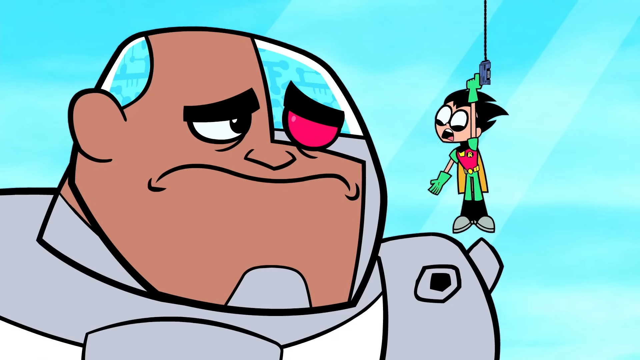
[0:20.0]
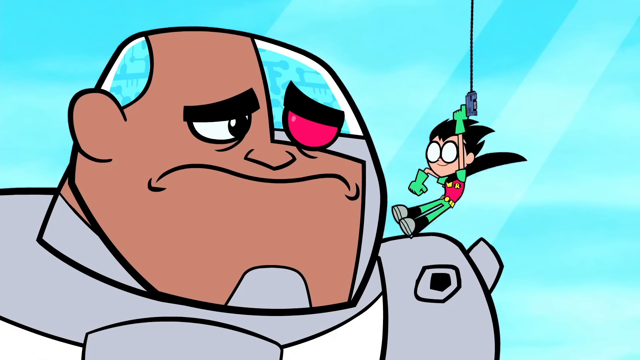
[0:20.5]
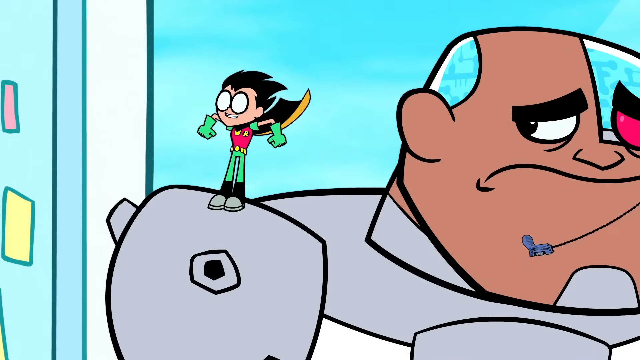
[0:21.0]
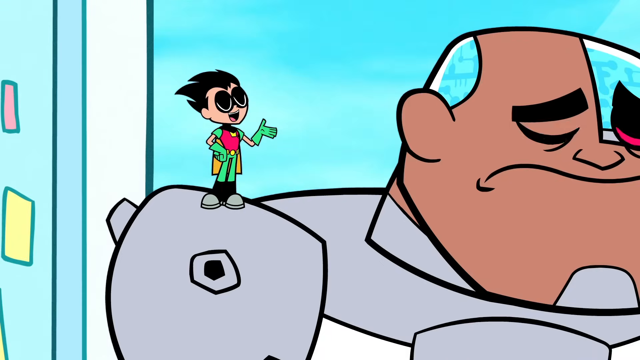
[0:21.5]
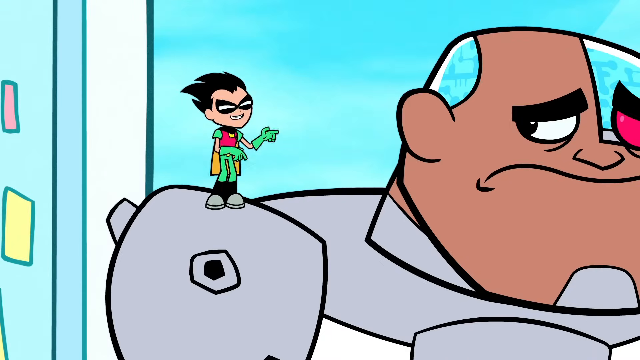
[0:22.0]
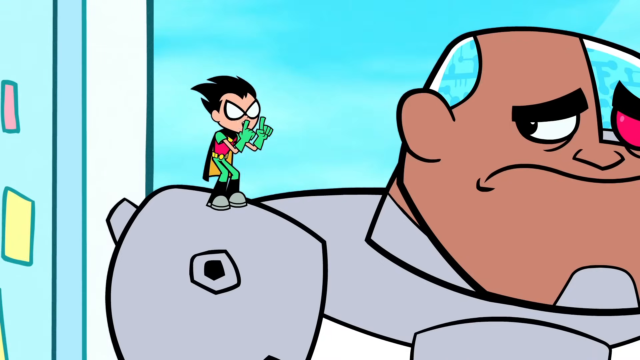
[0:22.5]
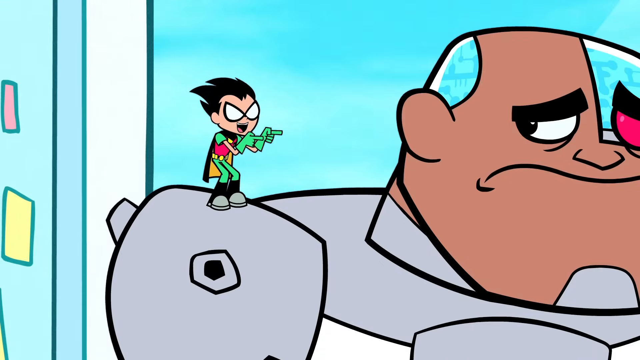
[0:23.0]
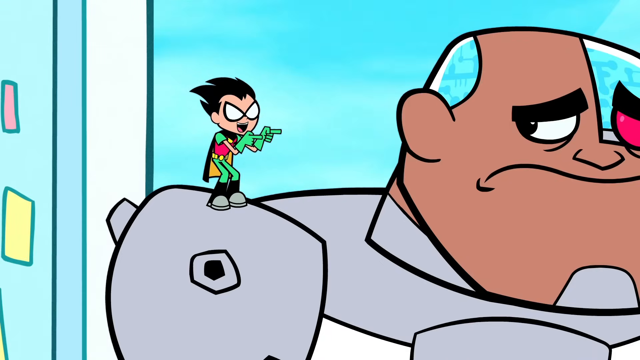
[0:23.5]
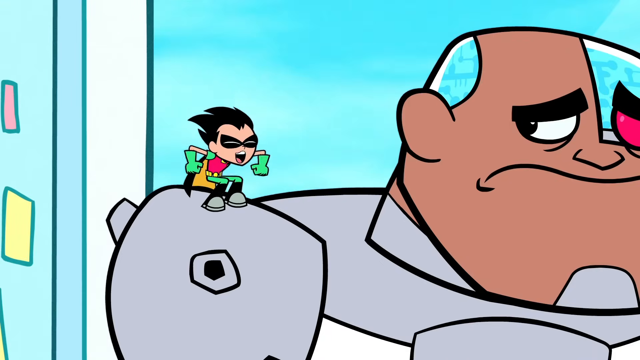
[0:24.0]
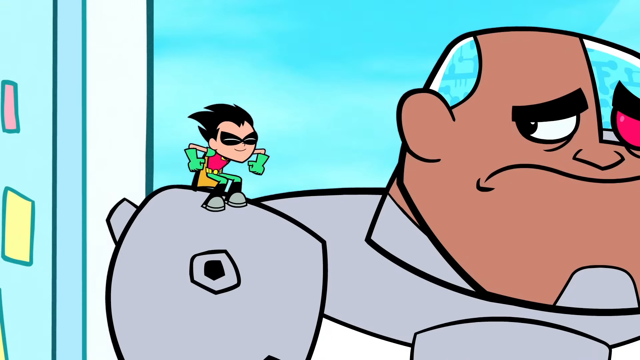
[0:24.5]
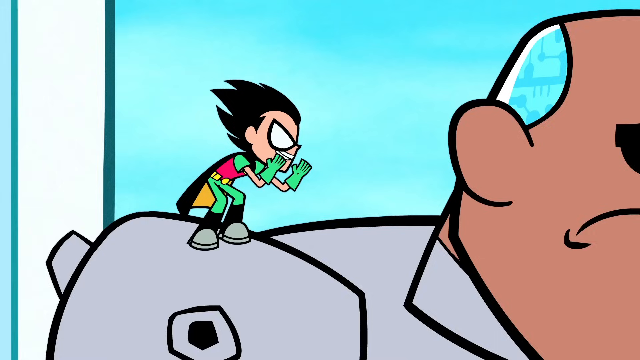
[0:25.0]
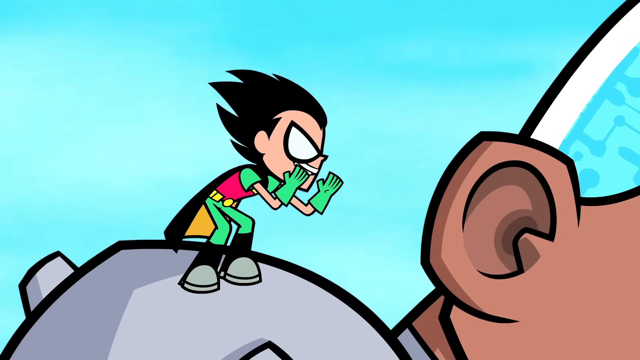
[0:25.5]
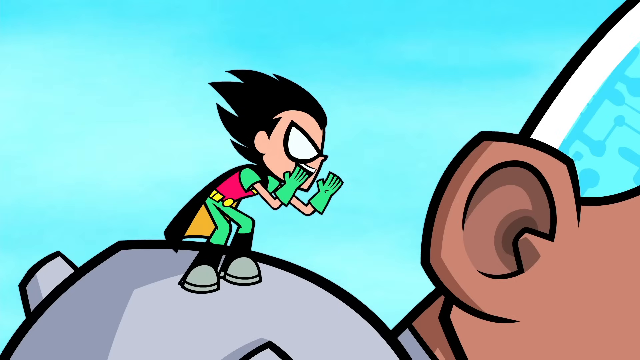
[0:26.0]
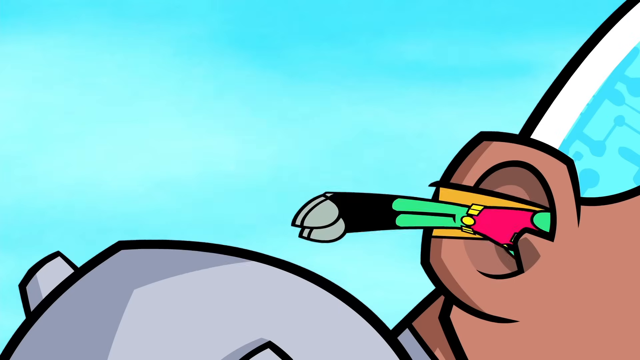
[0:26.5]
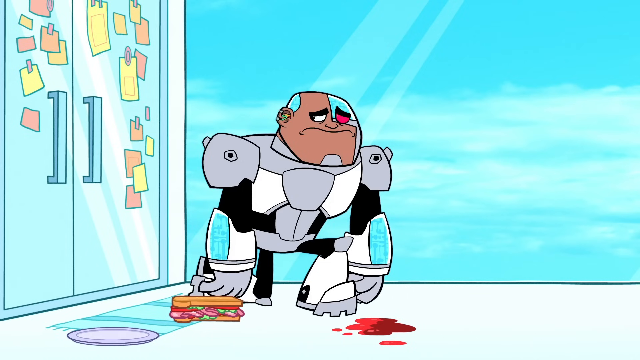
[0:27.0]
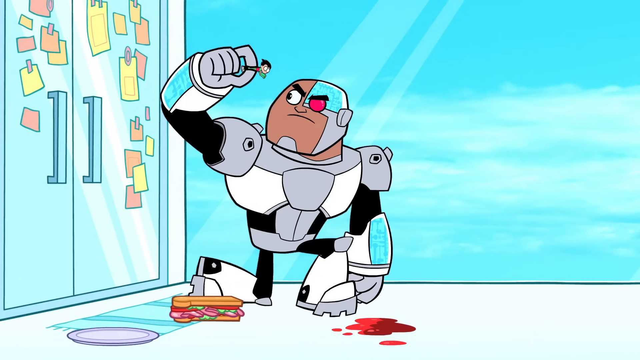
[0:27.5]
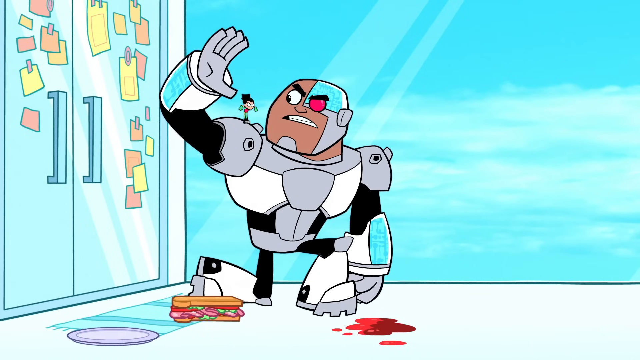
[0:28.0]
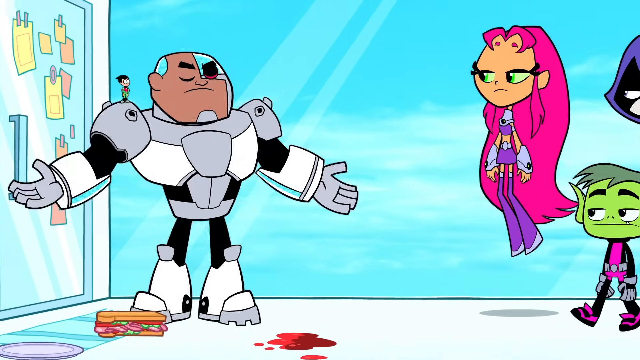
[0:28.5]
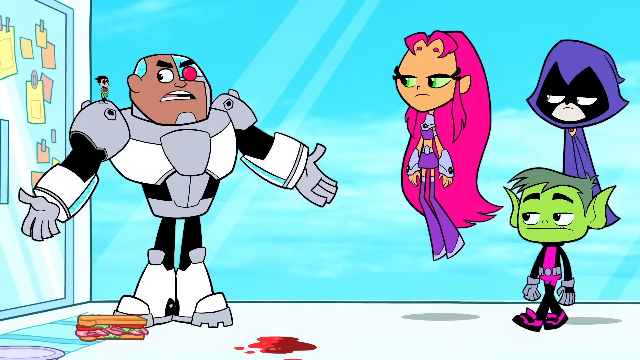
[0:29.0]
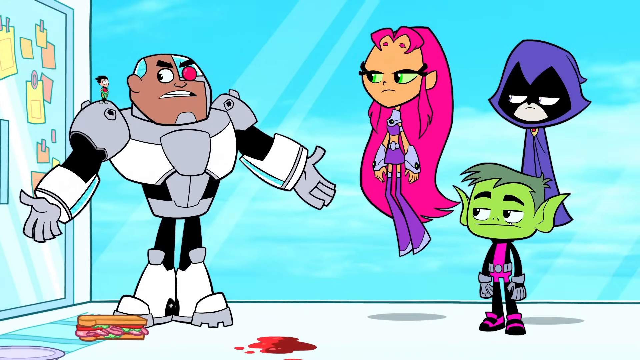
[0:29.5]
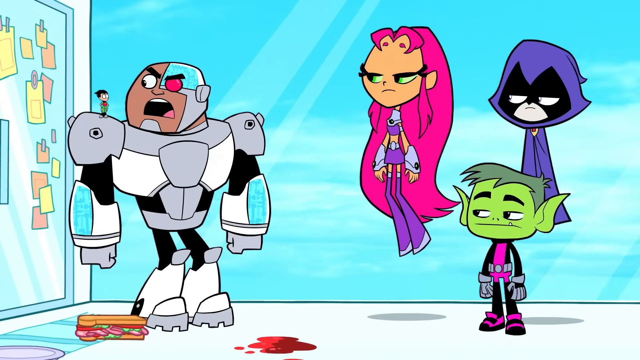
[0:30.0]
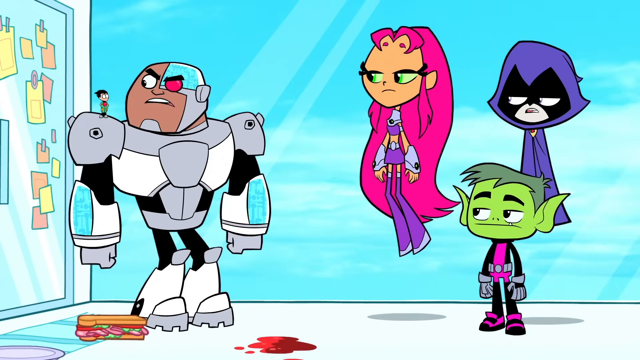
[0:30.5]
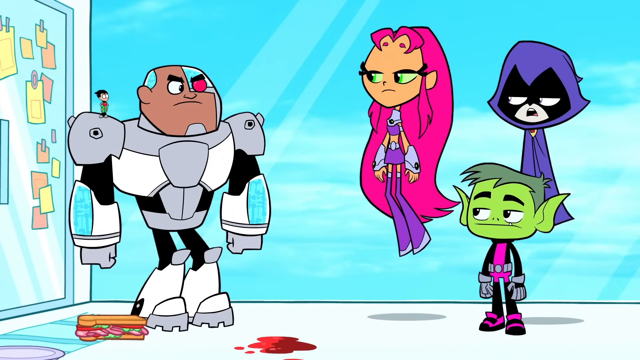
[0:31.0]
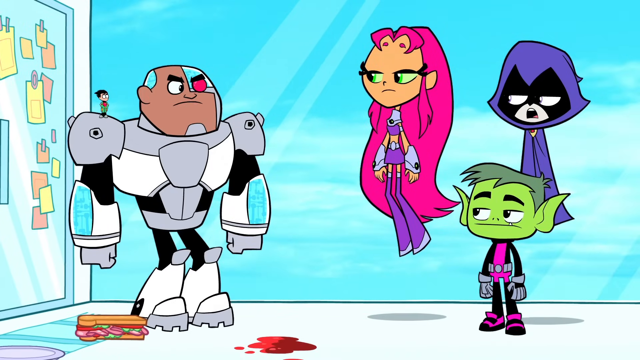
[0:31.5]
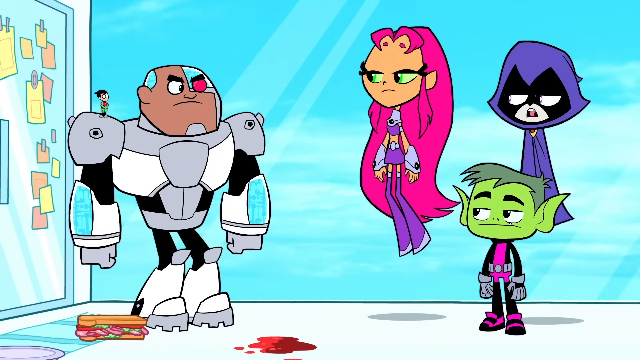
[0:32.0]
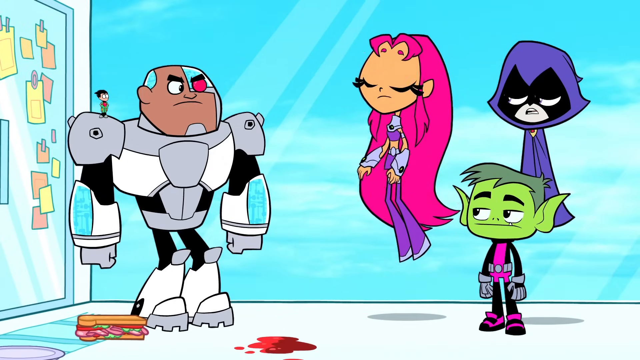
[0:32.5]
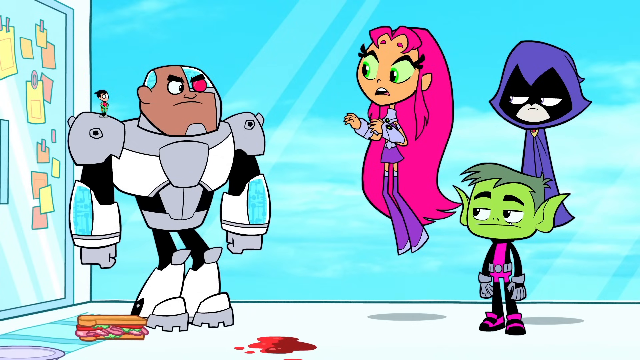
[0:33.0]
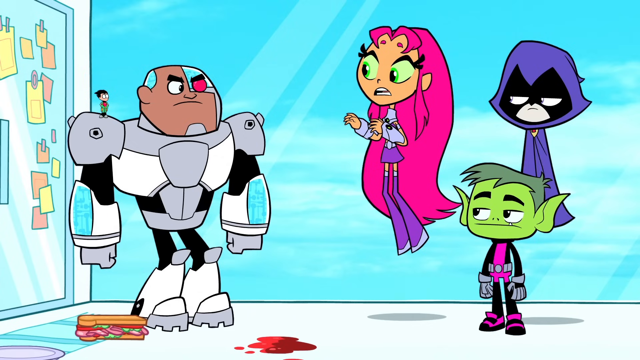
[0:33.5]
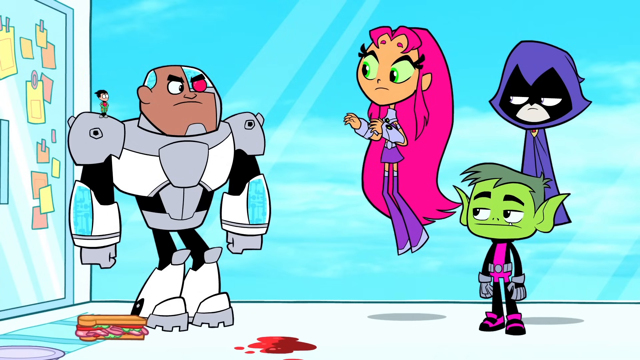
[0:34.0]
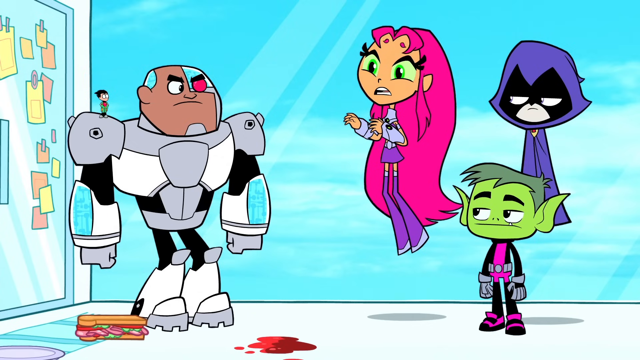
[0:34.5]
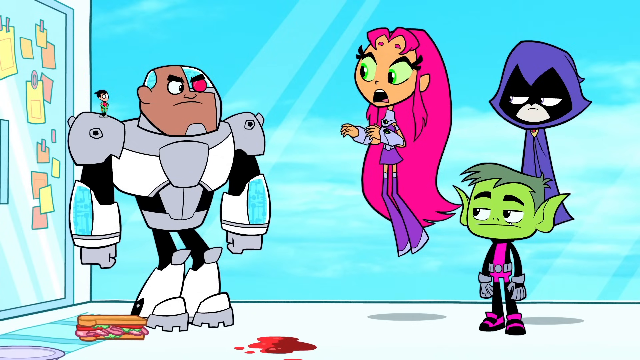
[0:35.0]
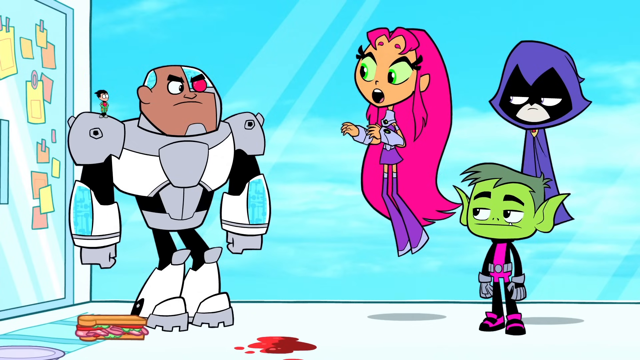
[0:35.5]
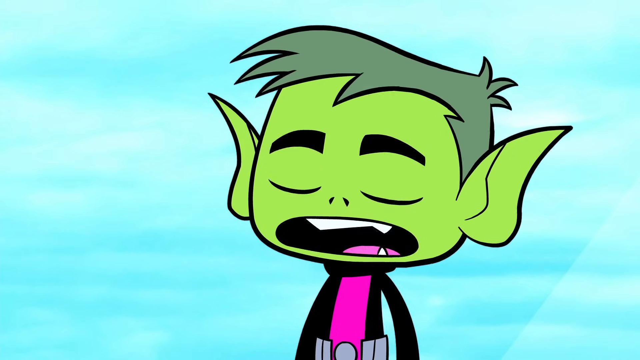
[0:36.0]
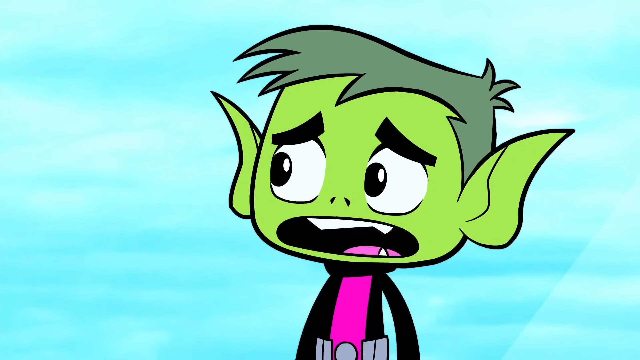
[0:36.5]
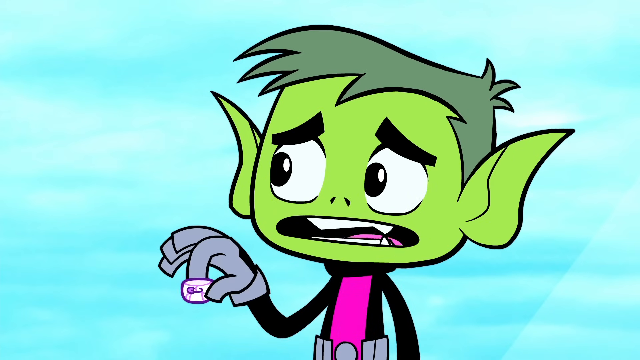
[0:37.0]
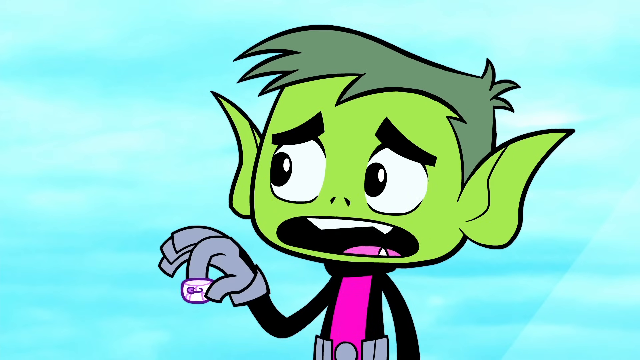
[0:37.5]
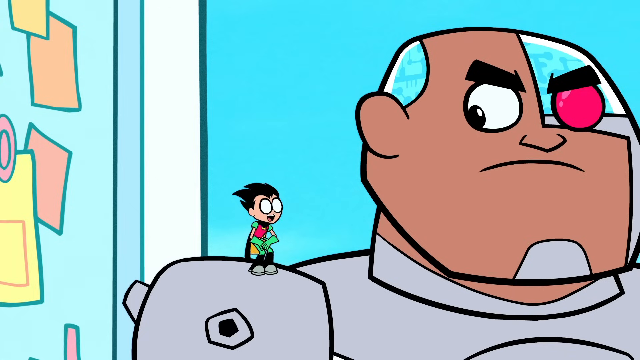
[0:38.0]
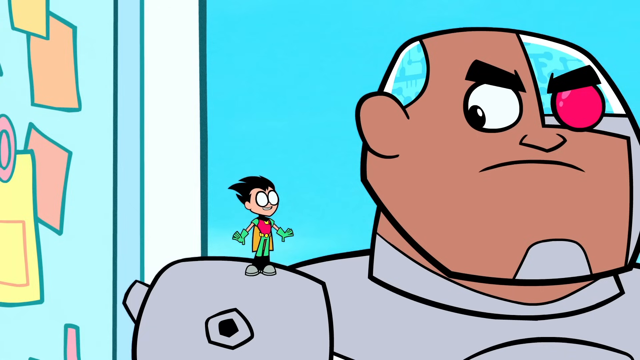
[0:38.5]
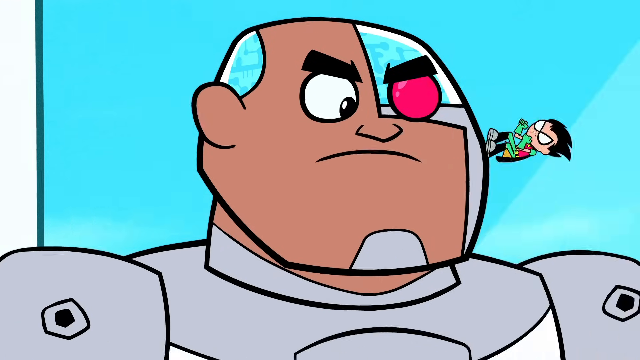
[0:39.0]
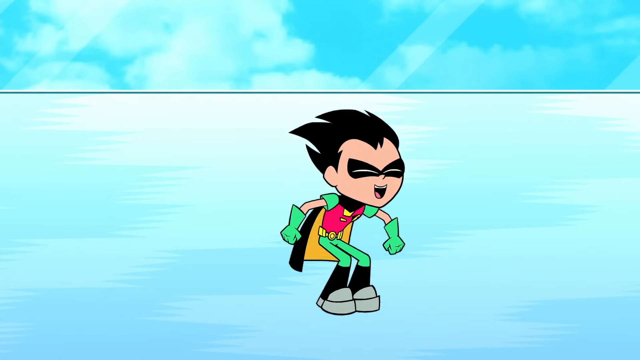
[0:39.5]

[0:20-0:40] Robin, who is very tiny, talks to Cyborg after using his grappling gun to pull himself up to Cyborg's level. He swings over to stand on Cyborg's right shoulder. Robin wears a black and yellow cape, a green and red costume and an eye mask. He points at Cyborg as he talks to him, then gets closer and whispers in his ear before trying to jump inside Cyborg's ear. The rest of the Teen Titans come into view, full-sized rather than small like Robin: Starfire with her purple outfit and long pink hair; Raven with her black mask and purple robe, its hood pulled up; and Beast Boy in a pink and black costume, with green skin and pointed green ears. Starfire and Raven are both floating in the air as if flying, while Beast Boy stands on the ground. They all talk to Robin and Cyborg.